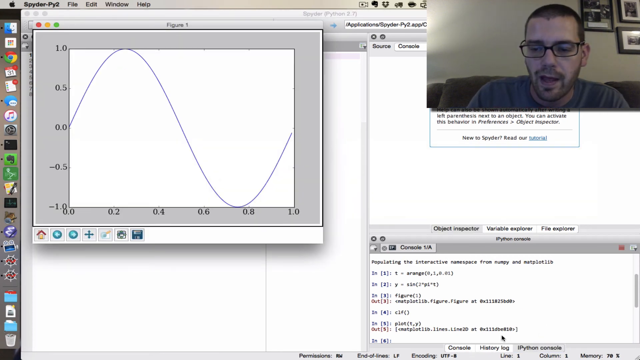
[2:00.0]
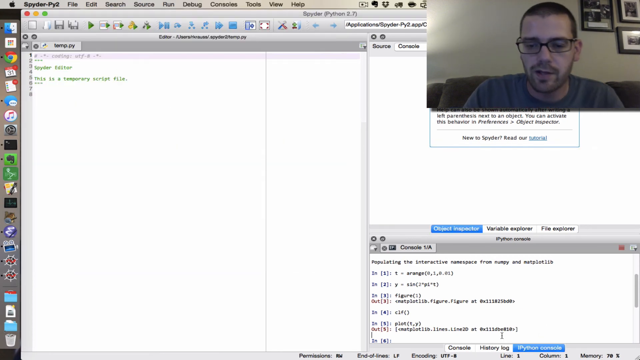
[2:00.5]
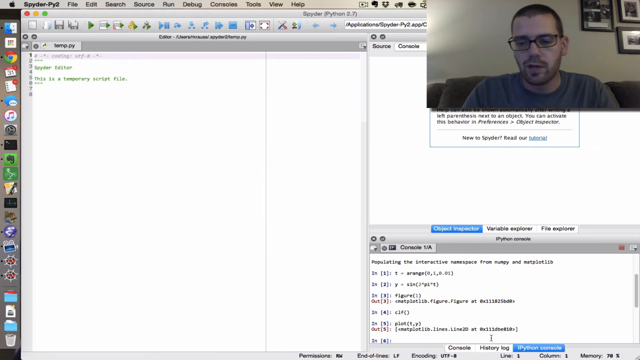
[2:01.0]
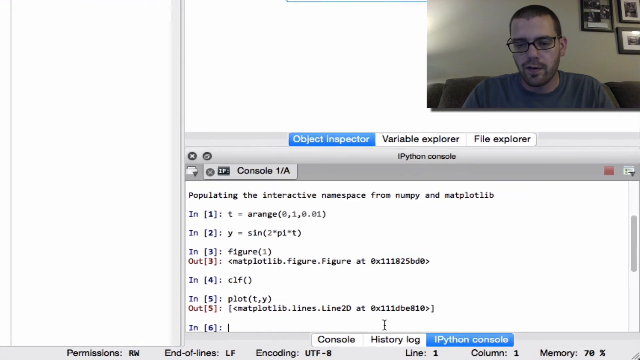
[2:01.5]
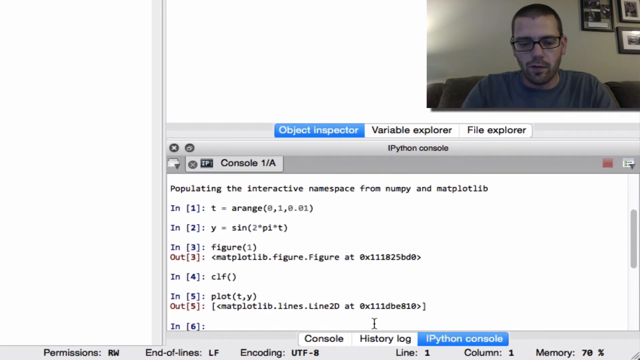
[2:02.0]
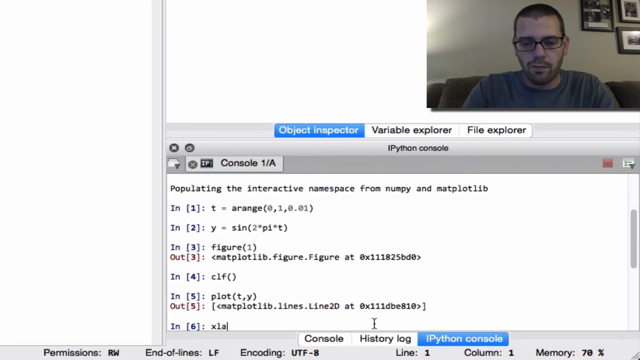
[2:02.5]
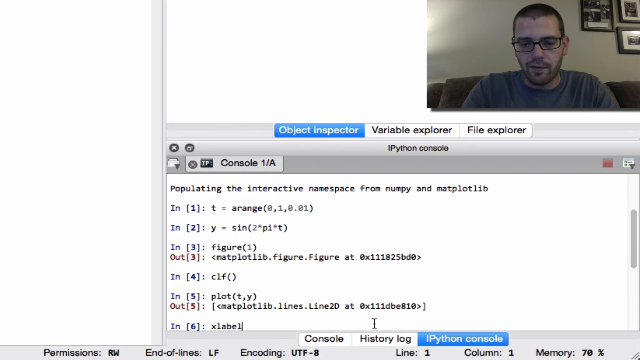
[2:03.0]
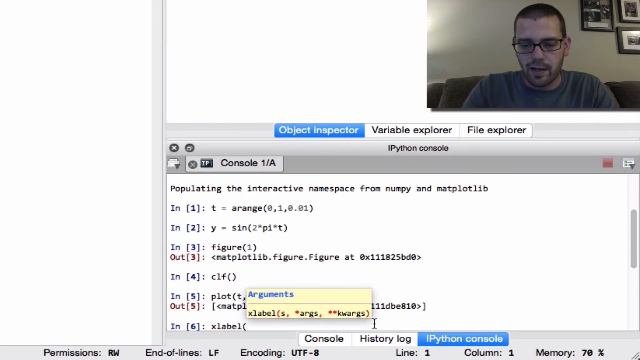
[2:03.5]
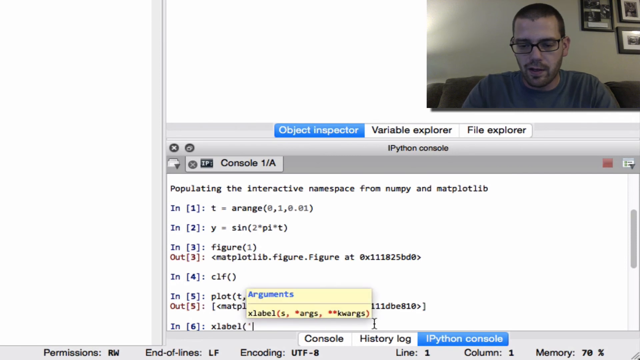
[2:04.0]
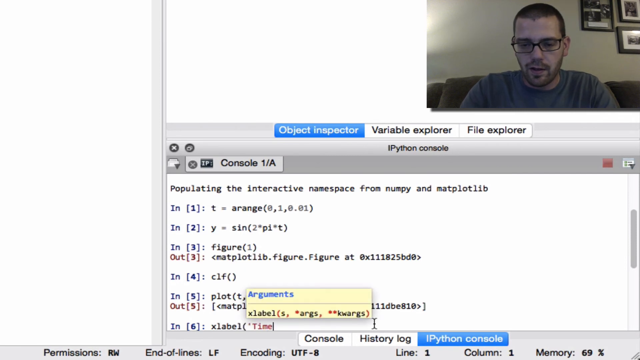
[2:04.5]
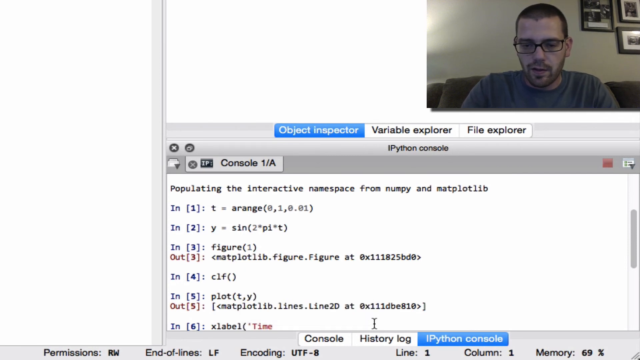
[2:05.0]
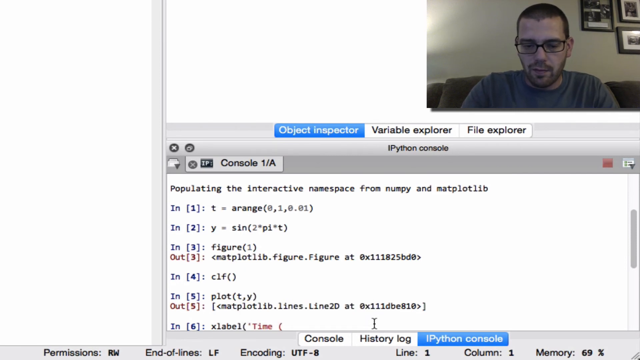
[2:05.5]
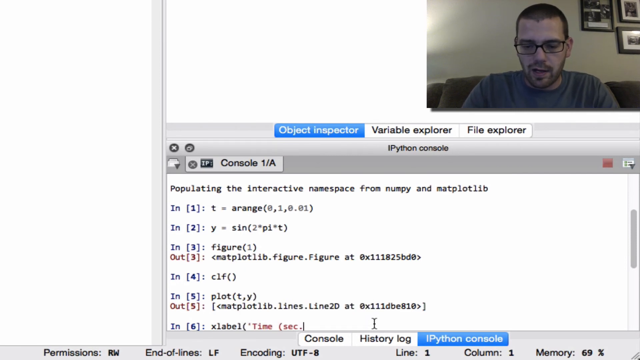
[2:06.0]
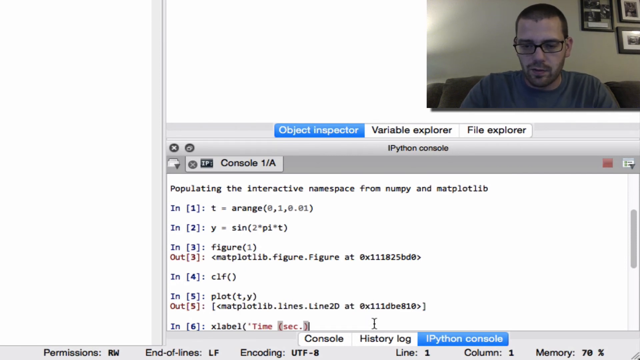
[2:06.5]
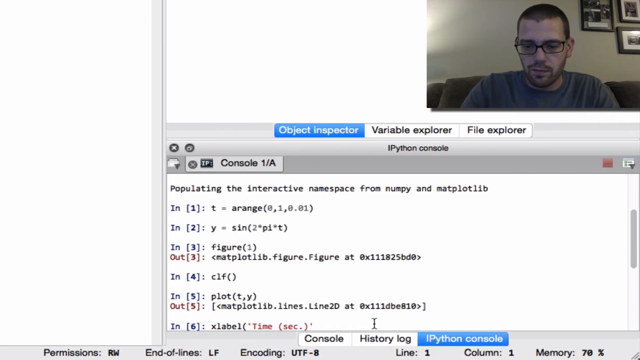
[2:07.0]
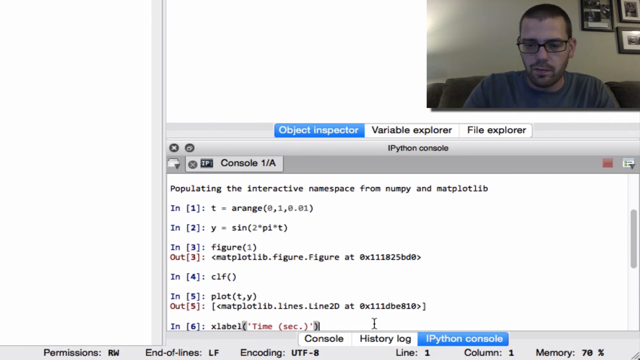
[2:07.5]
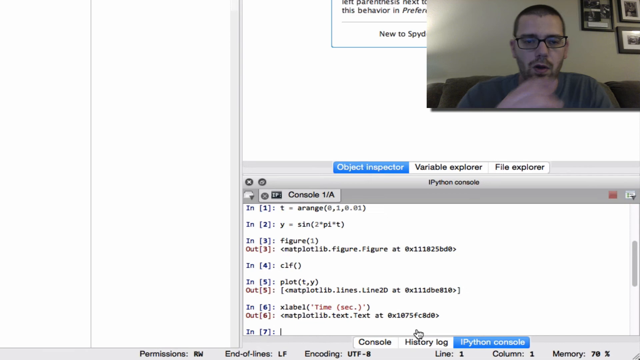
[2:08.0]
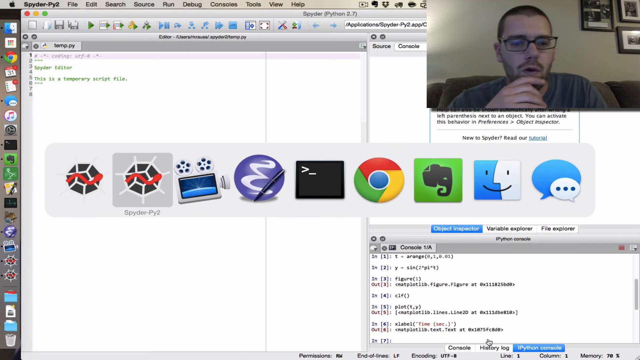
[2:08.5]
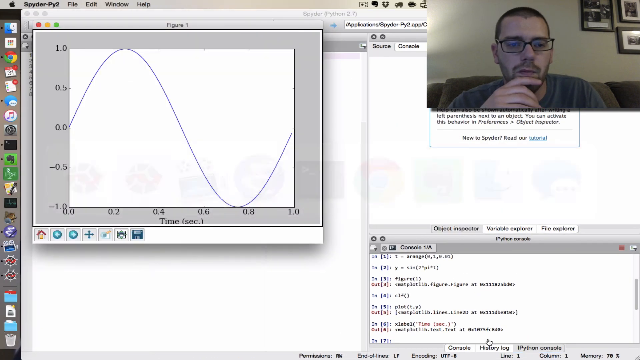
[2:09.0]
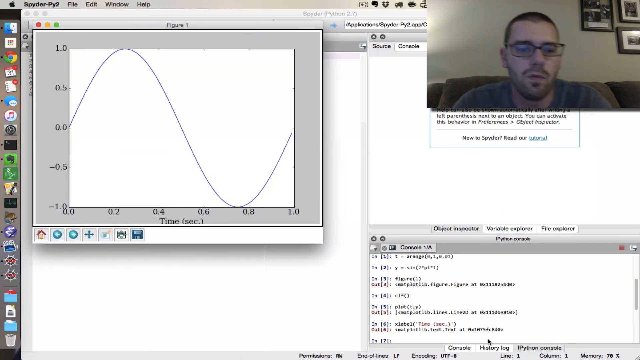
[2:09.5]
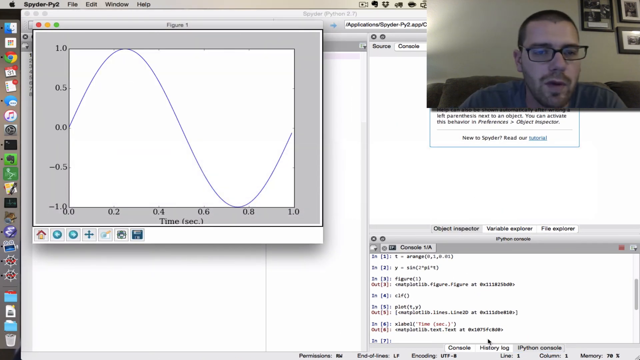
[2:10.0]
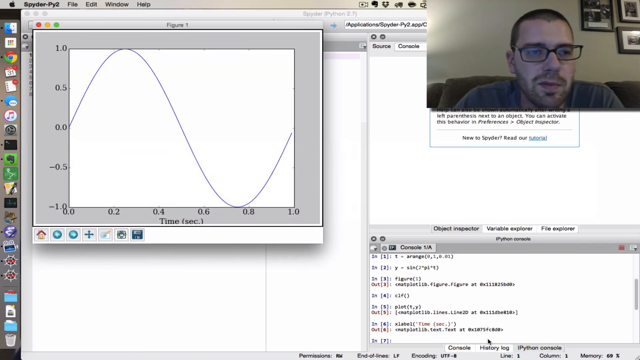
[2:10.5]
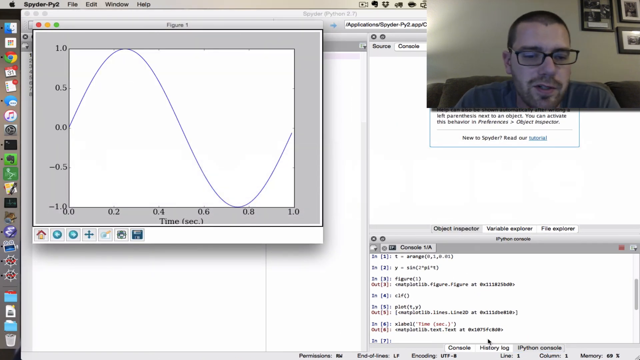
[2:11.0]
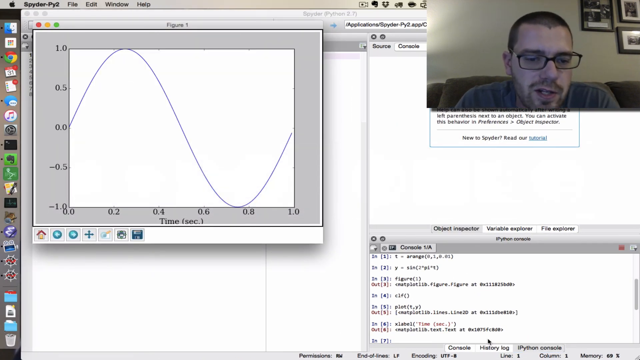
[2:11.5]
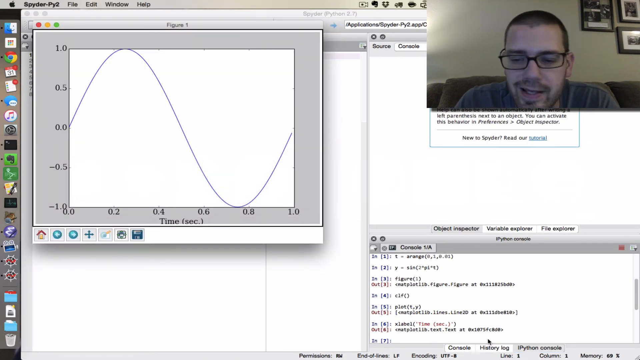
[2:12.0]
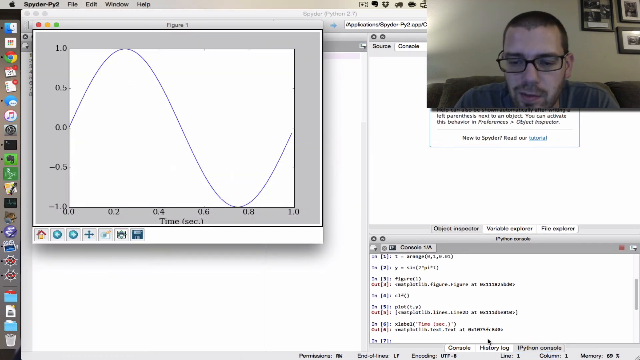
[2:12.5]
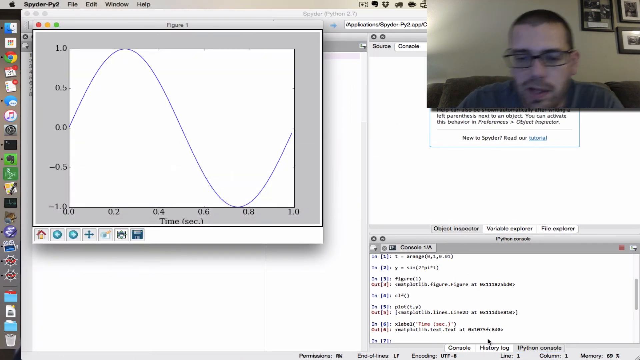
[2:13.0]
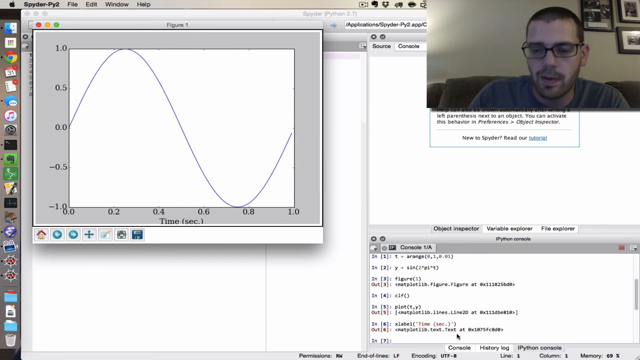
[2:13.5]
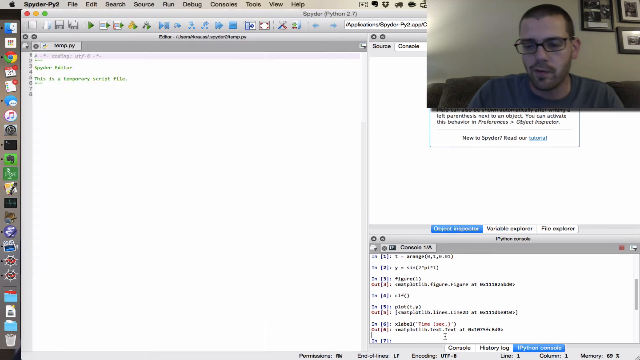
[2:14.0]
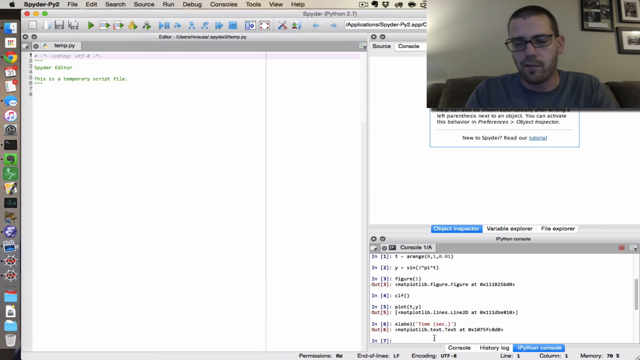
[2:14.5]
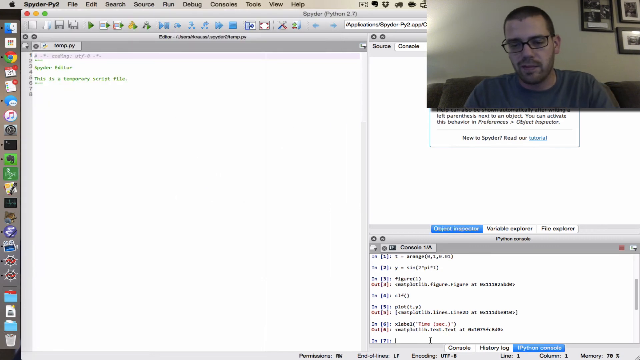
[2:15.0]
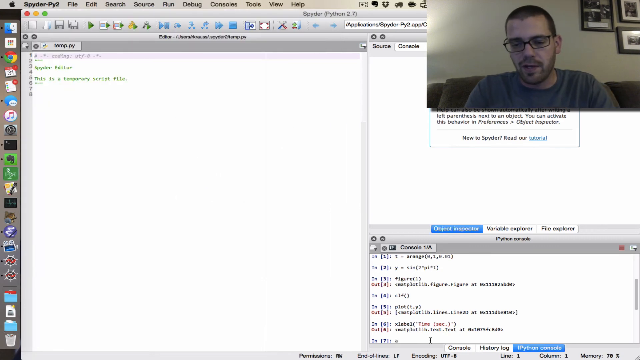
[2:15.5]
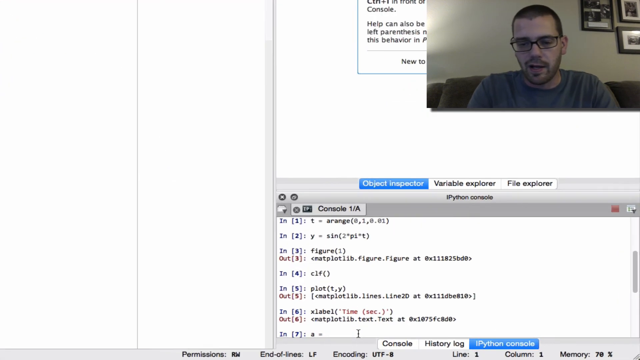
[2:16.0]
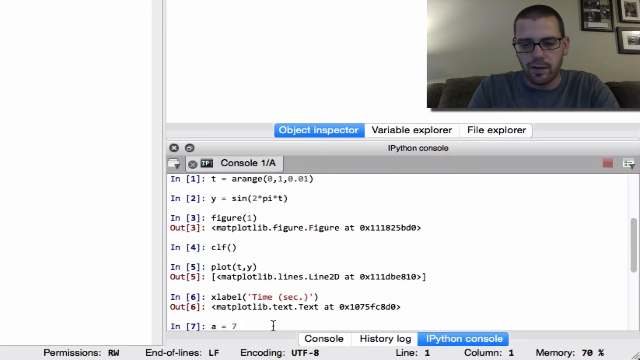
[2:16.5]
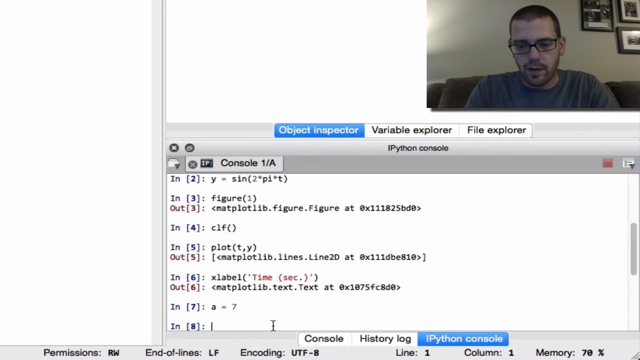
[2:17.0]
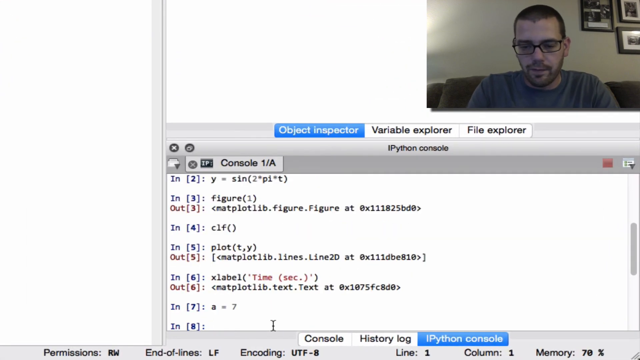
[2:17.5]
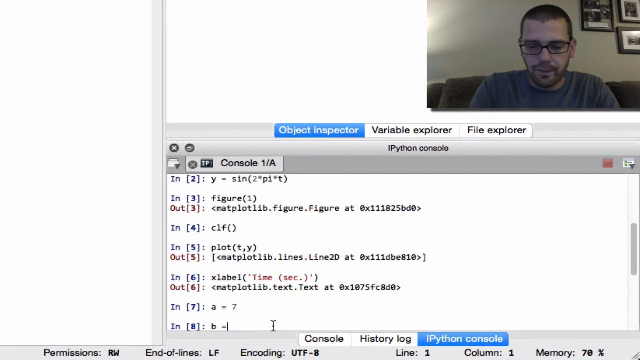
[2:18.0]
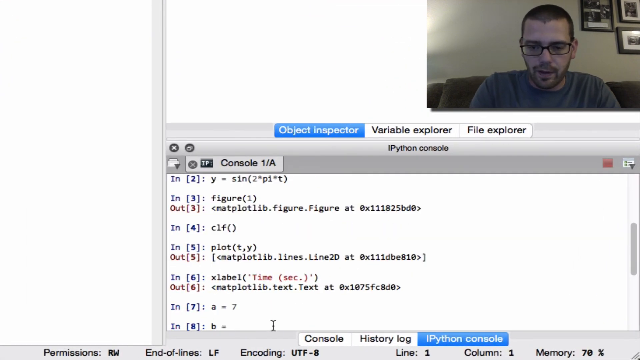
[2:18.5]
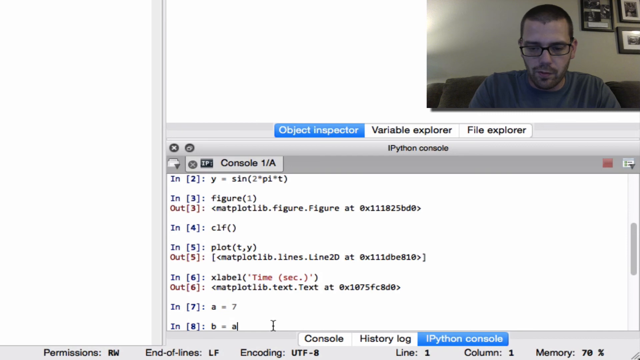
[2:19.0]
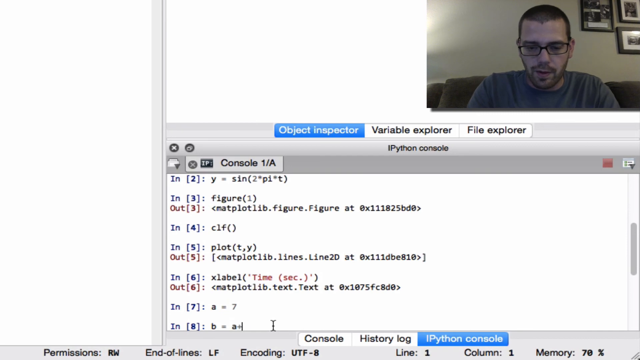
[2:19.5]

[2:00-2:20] The graph closes and the view zooms back into the IPython console. On entry 6 he types "xlabel(", and argument labels pop up, with xlabel and the parentheses in red. He types "time in seconds" with parentheses around it. He scrolls out, types entry 7, and figure 1 with the blue wavy line pops back up. He leans in toward the camera, seemingly thinking as he talks, and clicks off of it. He then adds a = 7 and b = a in entries 7 and 8. It looks like a step-by-step process, apparently building an interactive namespace. As he types at the bottom, the figure apparently changes, so he builds the wavy line with its X and Y values from the ground up, putting each step in a bracket with a number.